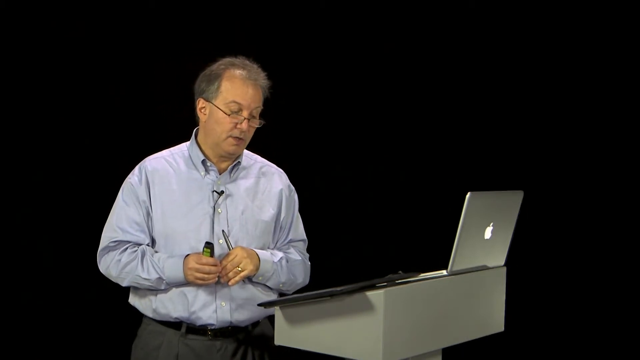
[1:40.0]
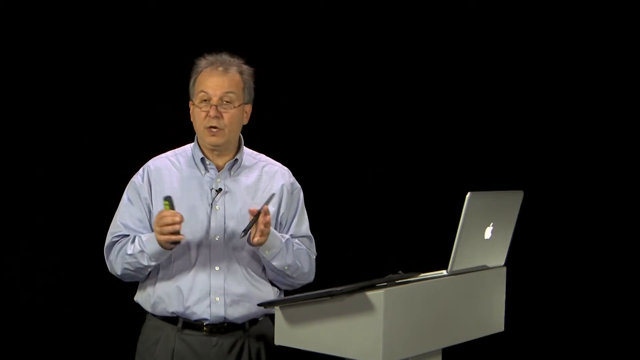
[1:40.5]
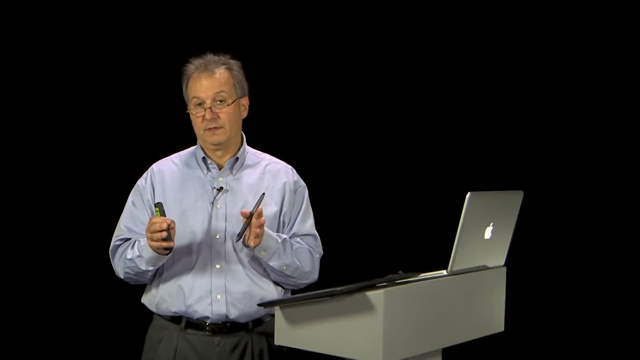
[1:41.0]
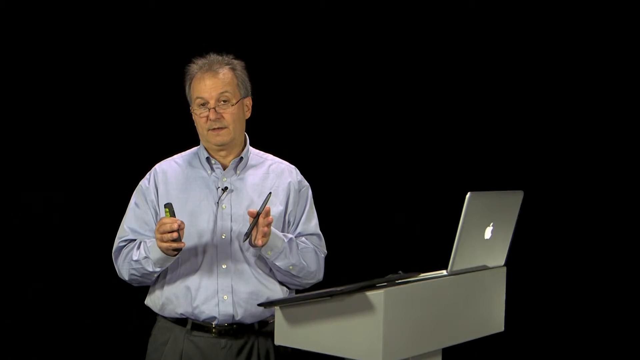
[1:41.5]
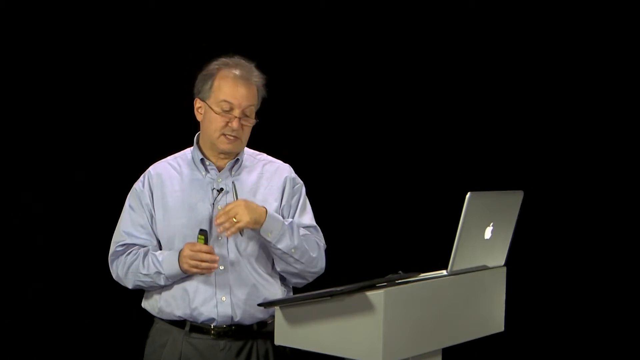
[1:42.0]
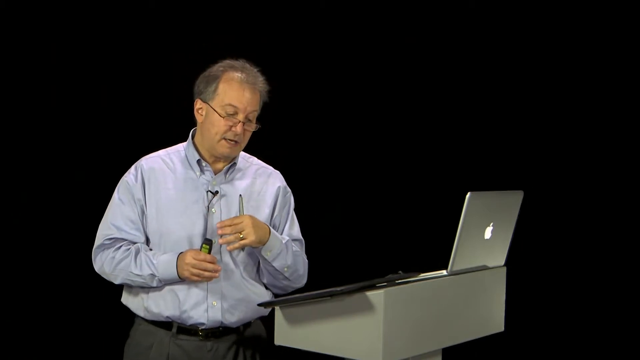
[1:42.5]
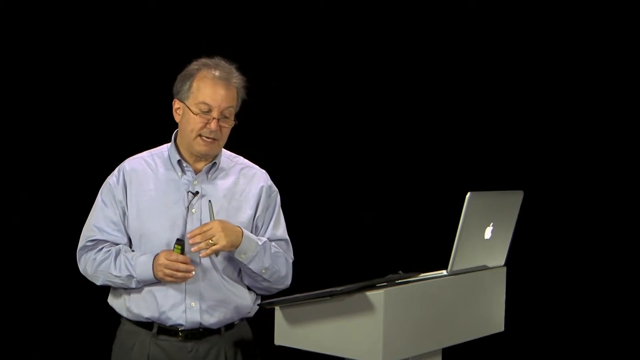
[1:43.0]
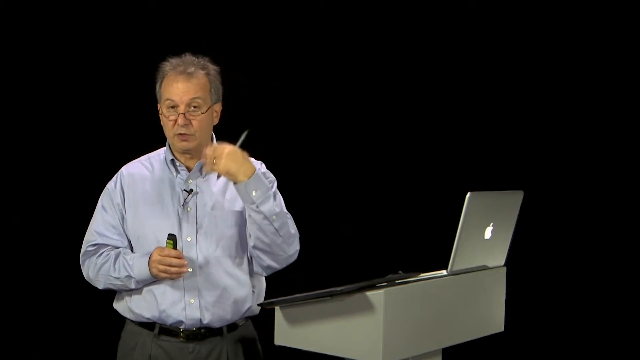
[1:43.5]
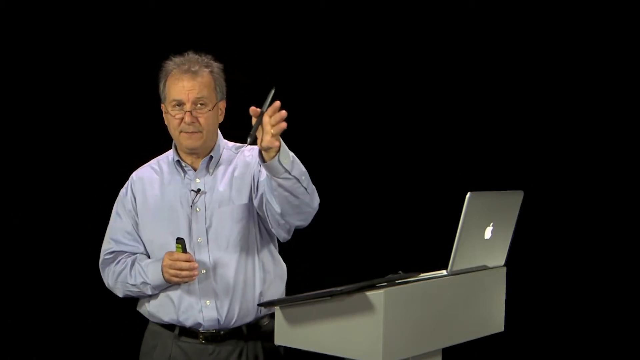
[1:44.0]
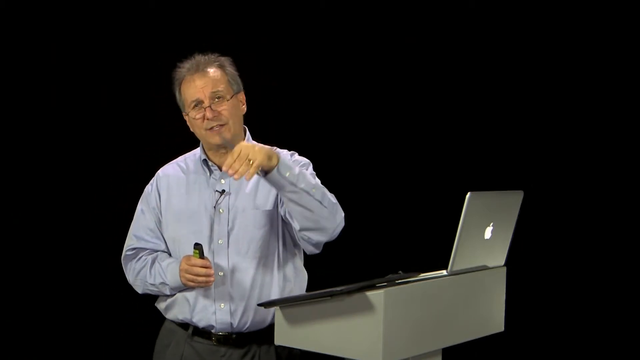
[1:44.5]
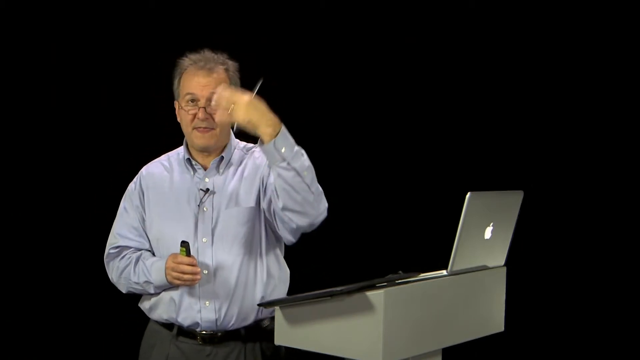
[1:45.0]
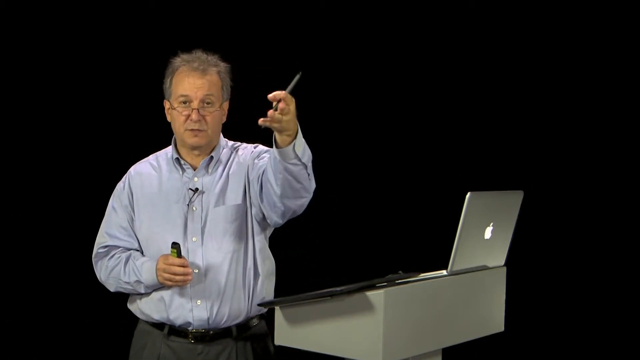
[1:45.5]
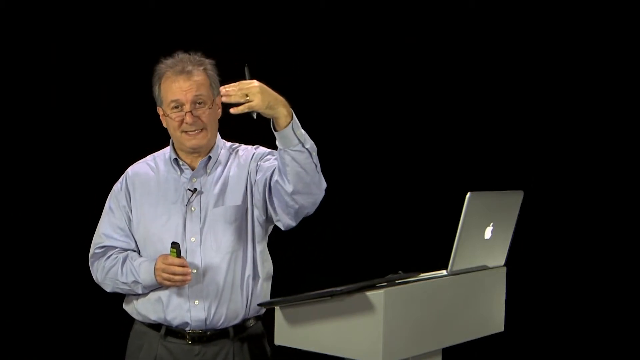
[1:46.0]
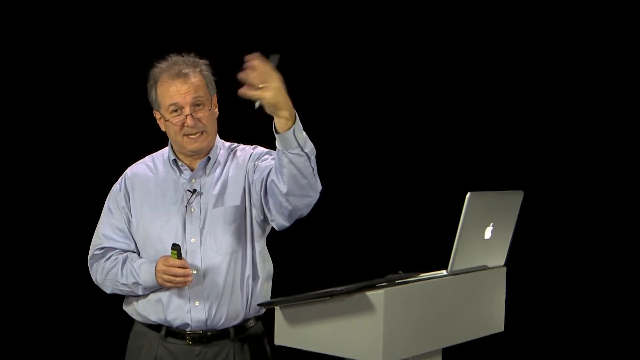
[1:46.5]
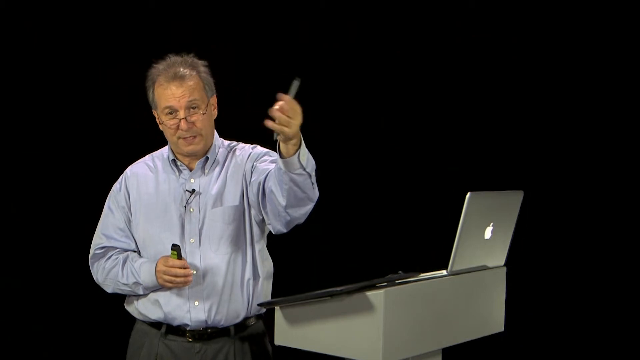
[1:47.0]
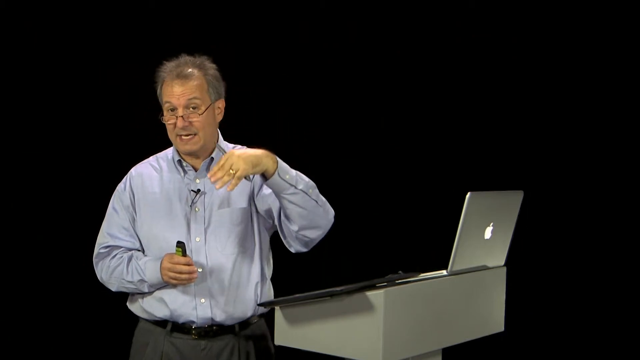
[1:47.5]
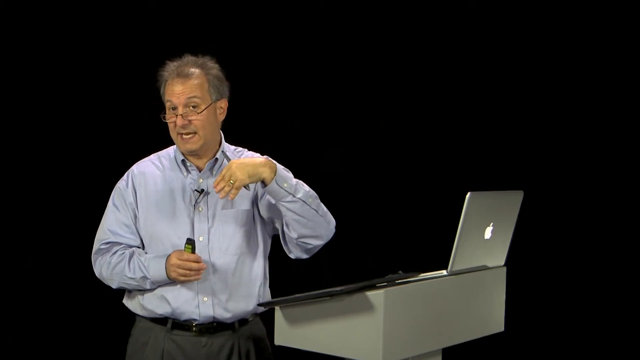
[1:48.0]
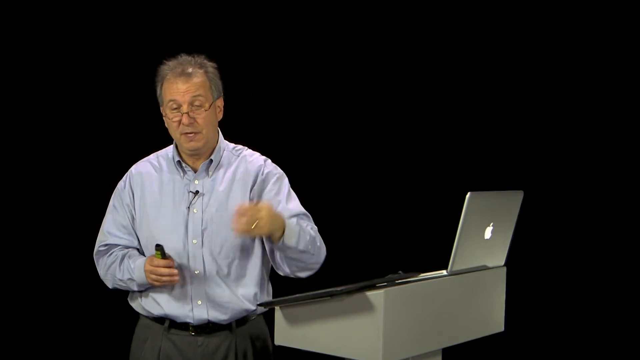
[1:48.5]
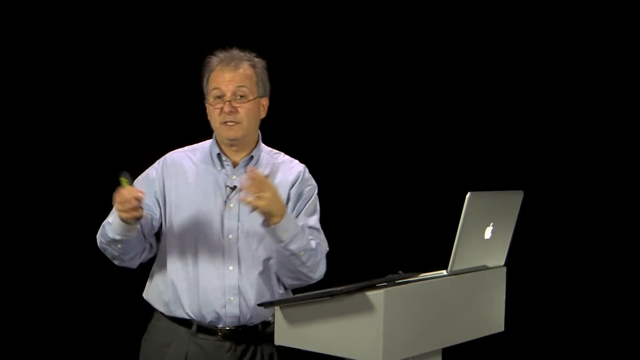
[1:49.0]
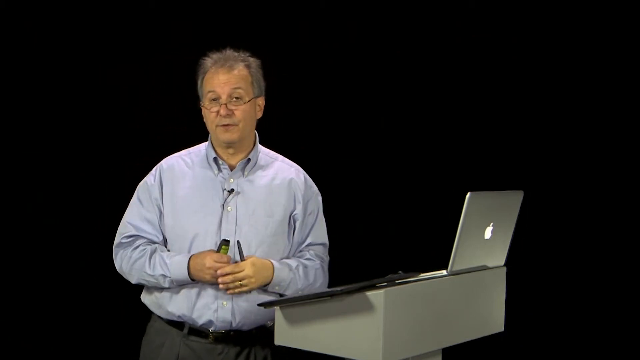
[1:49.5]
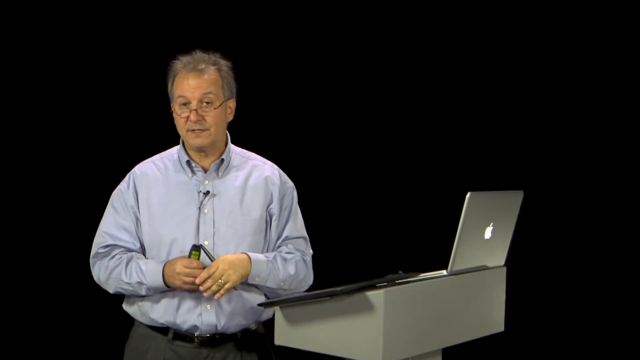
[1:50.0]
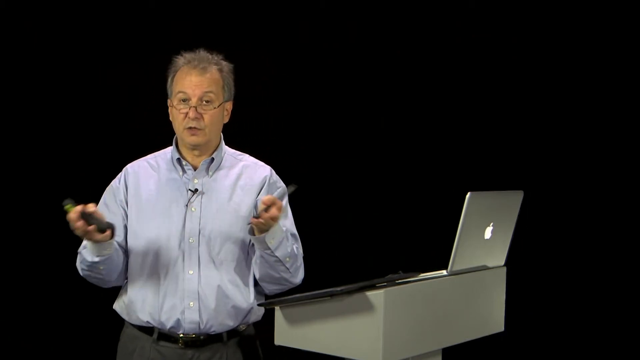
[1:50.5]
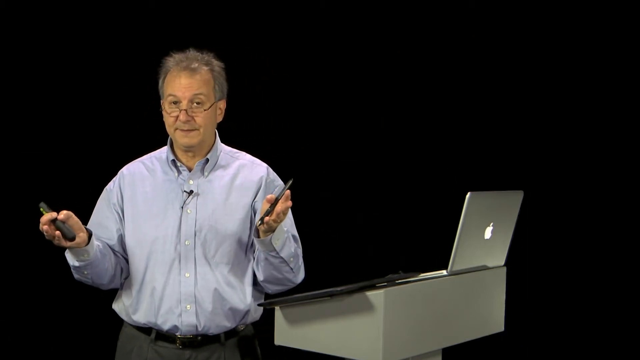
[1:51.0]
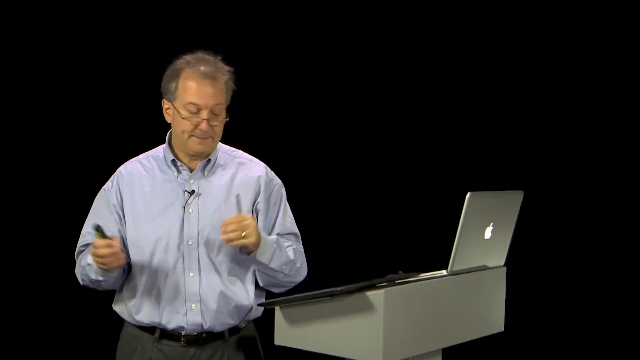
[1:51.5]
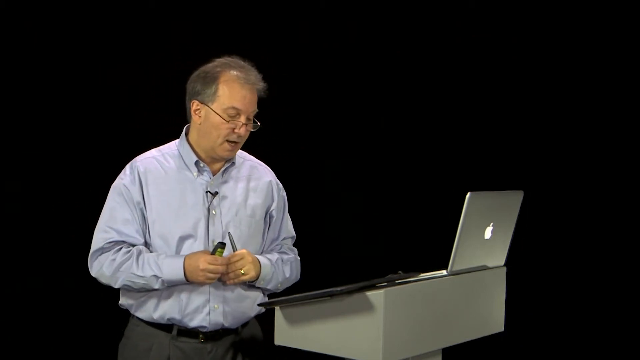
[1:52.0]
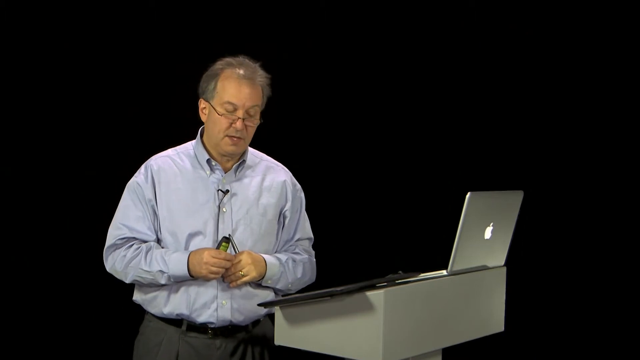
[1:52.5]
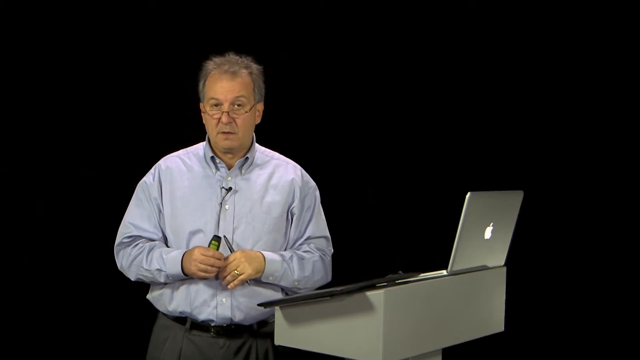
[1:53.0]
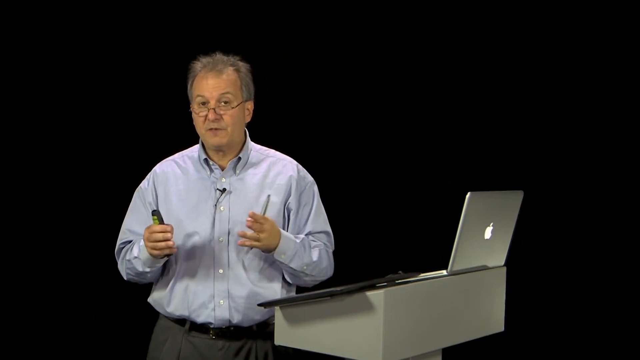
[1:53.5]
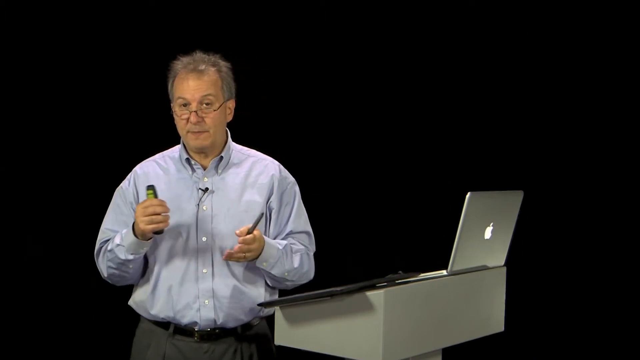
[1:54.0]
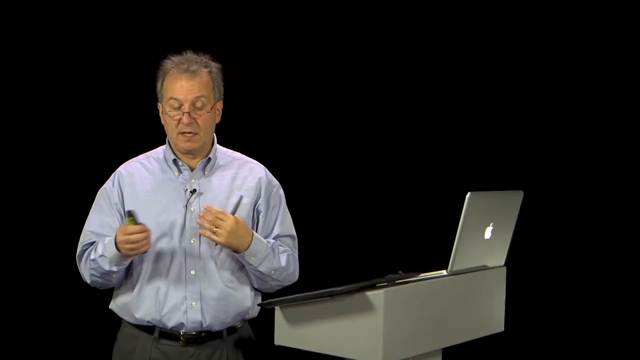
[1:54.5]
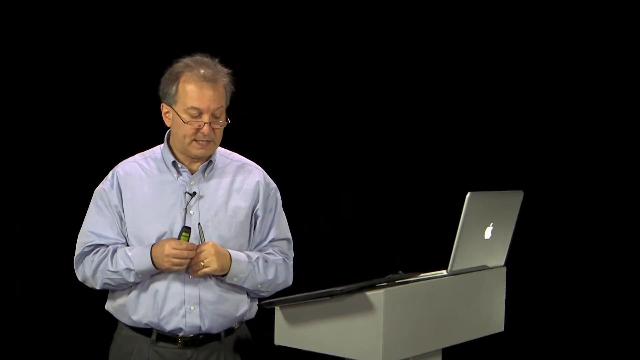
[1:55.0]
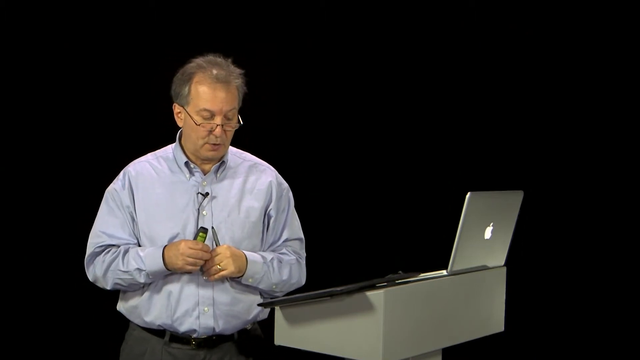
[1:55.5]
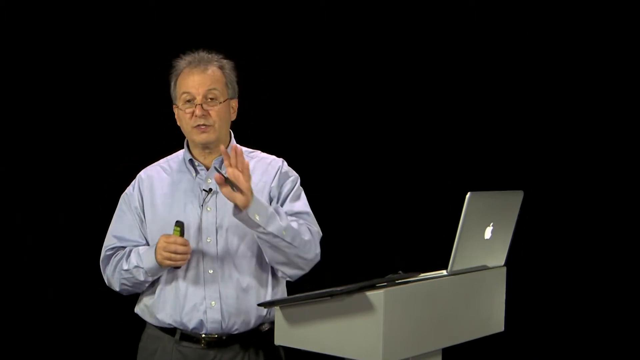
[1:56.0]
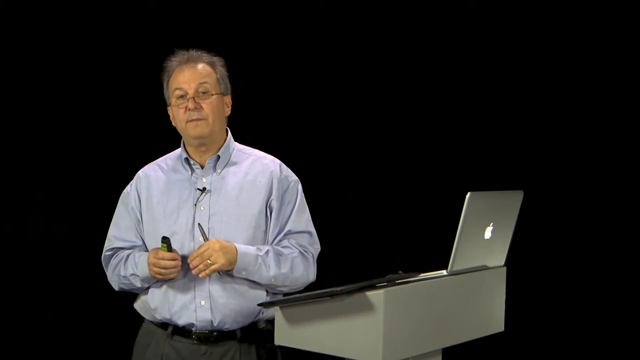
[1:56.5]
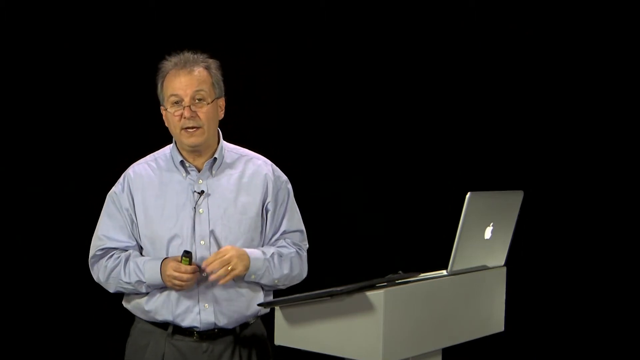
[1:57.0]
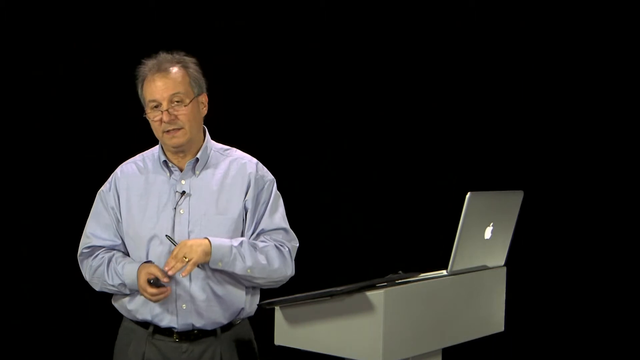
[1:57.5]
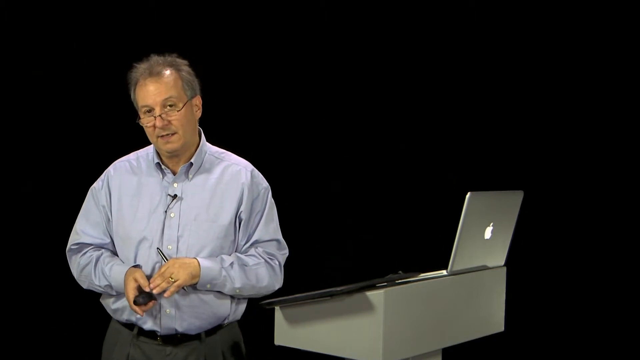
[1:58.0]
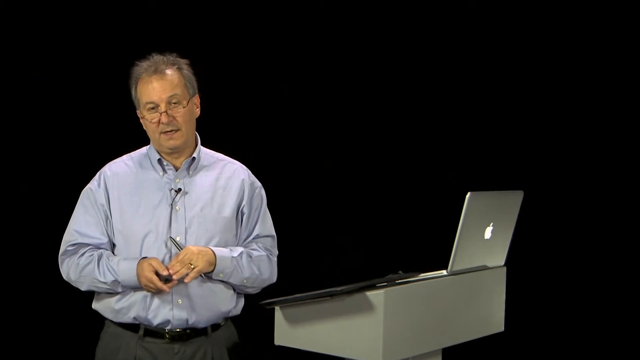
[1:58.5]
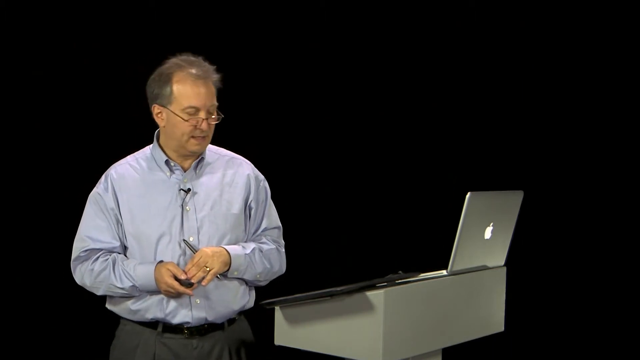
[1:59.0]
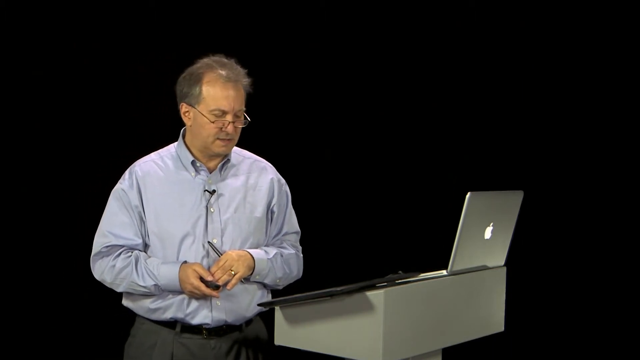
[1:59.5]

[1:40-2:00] The man with glasses and gray hair talks, using a variety of hand gestures. A black computer is in the middle of the scene, at the back. The background is completely black.